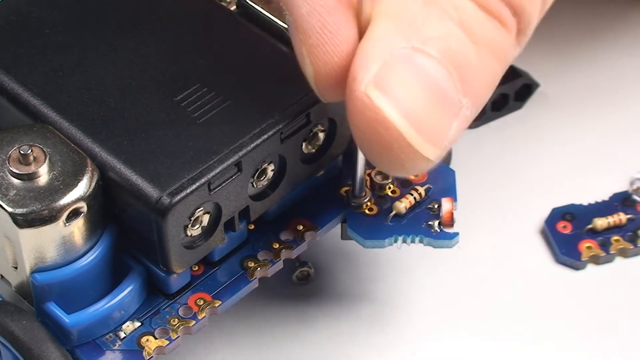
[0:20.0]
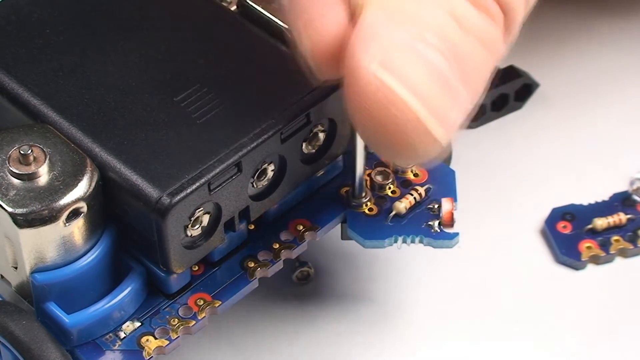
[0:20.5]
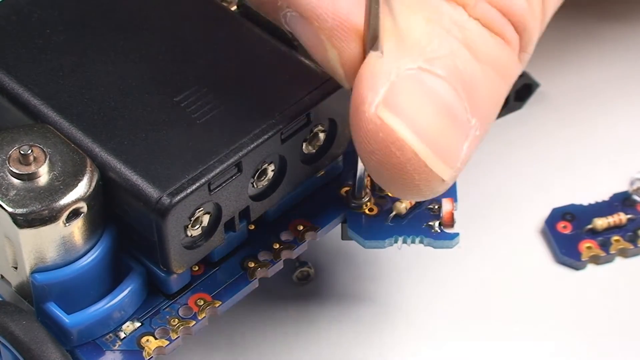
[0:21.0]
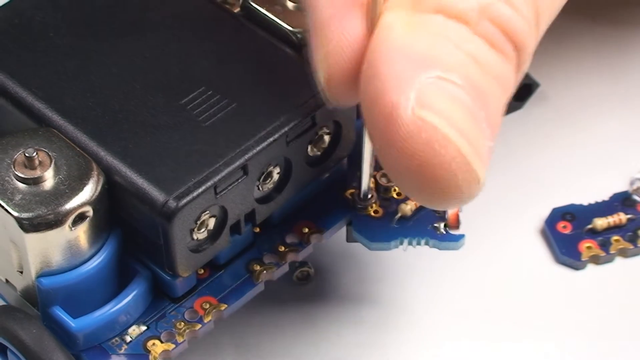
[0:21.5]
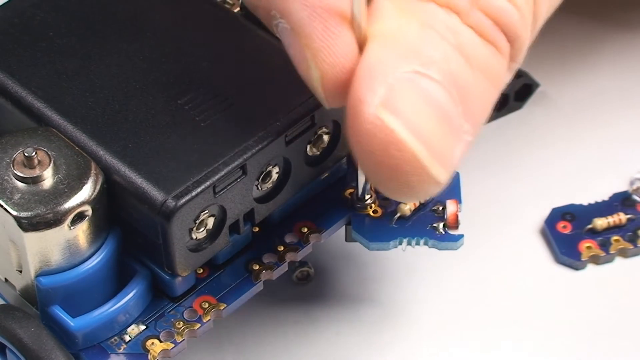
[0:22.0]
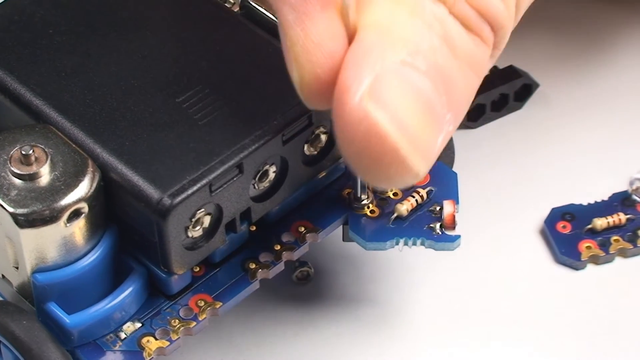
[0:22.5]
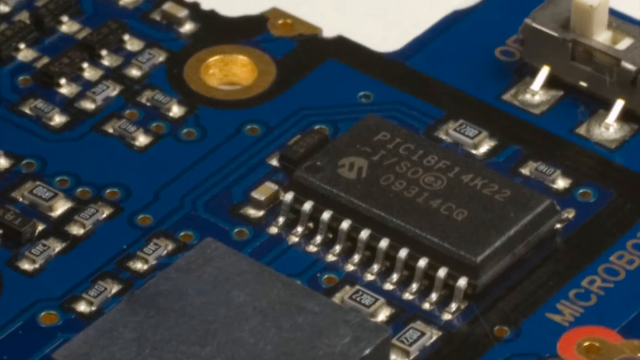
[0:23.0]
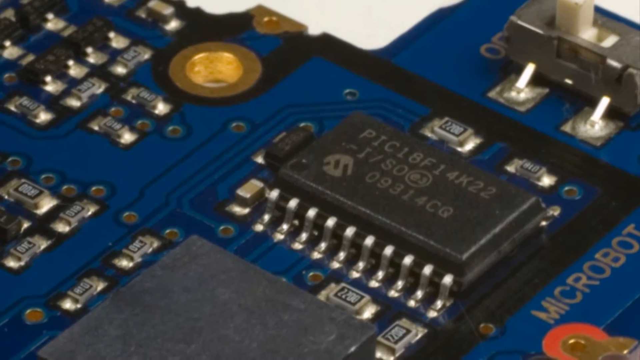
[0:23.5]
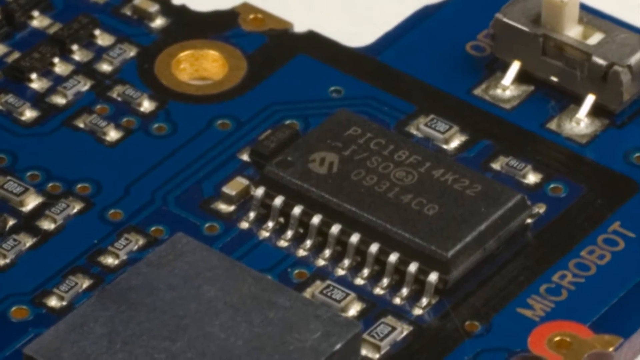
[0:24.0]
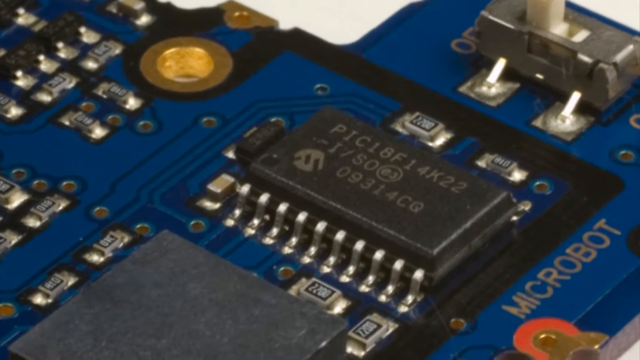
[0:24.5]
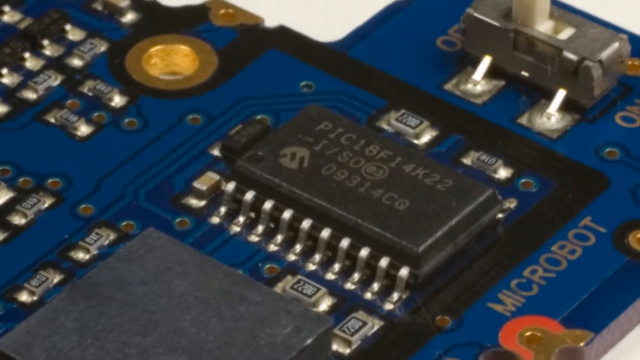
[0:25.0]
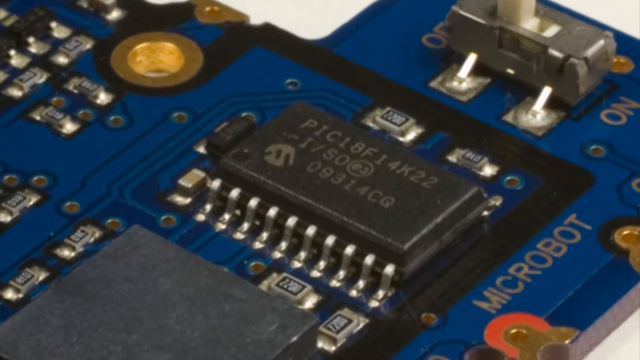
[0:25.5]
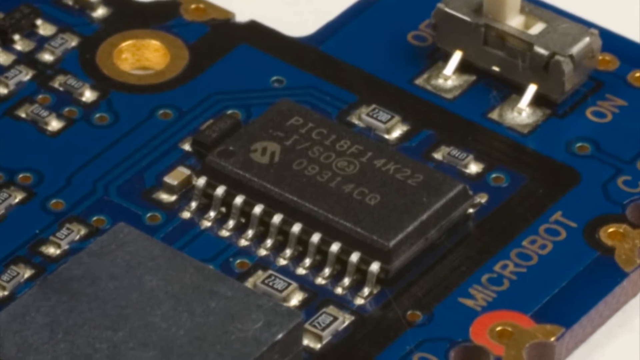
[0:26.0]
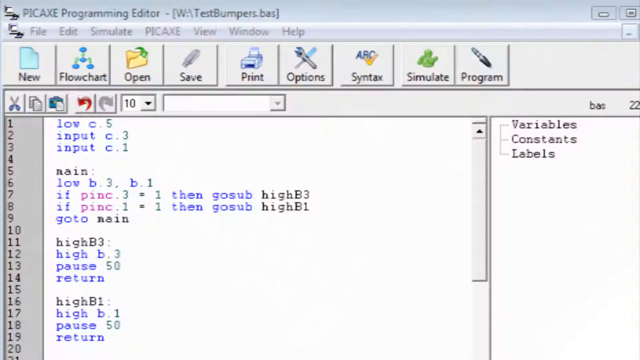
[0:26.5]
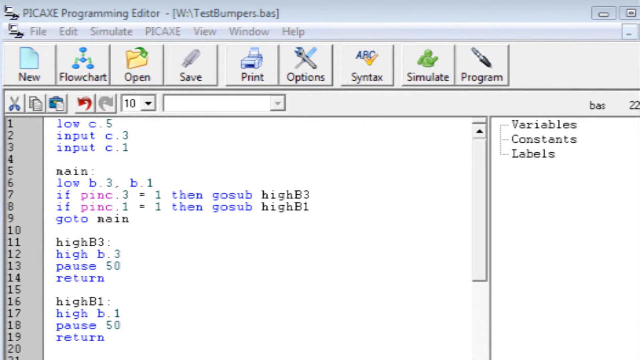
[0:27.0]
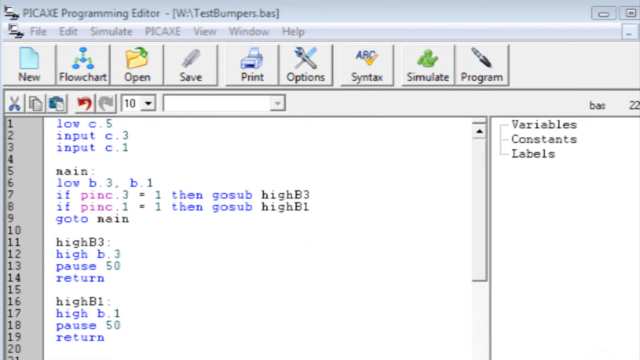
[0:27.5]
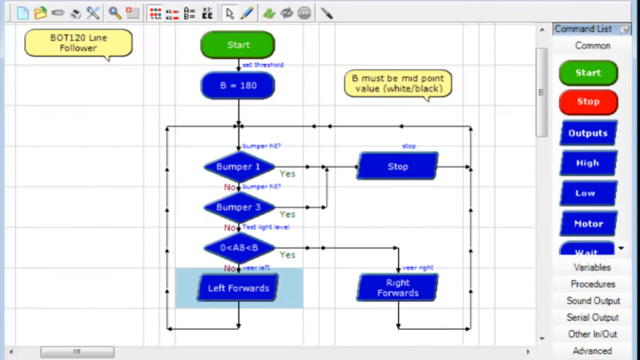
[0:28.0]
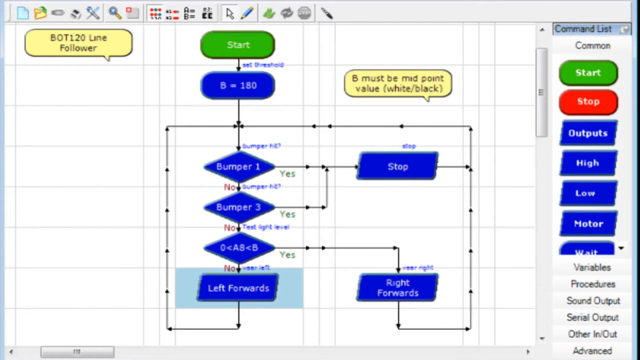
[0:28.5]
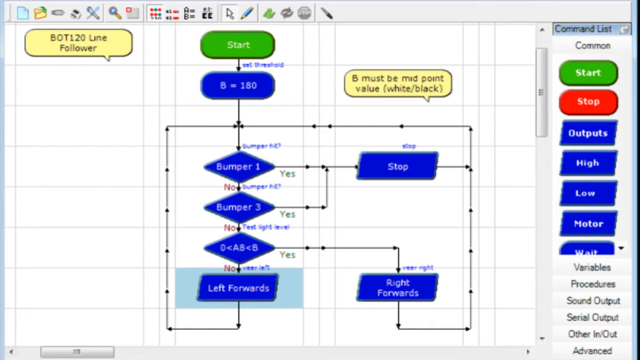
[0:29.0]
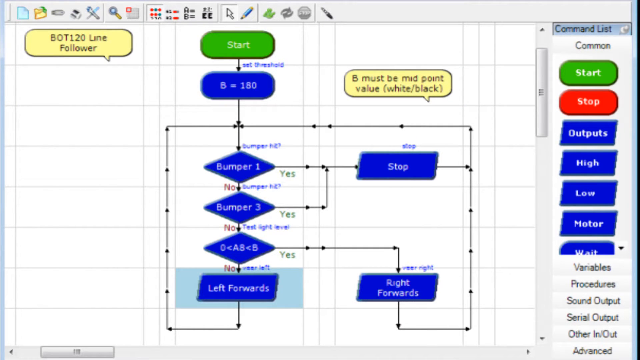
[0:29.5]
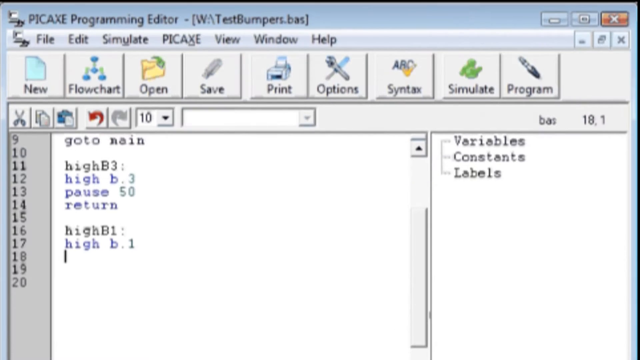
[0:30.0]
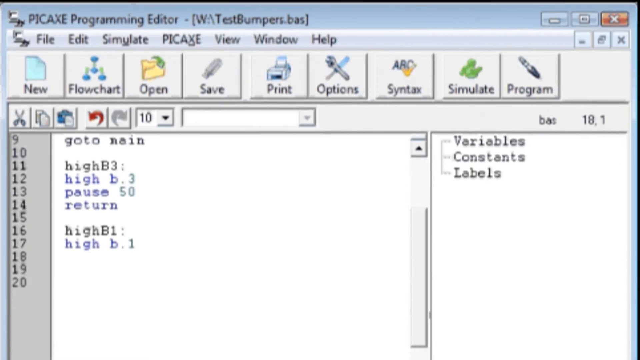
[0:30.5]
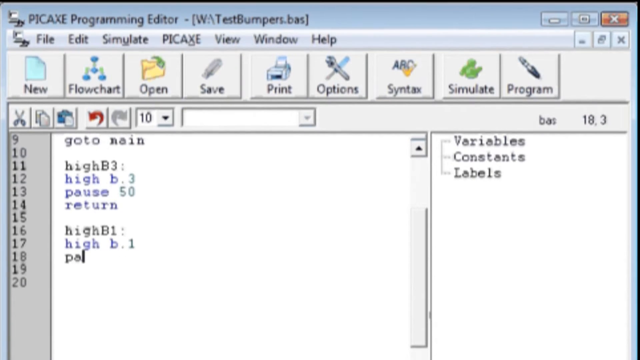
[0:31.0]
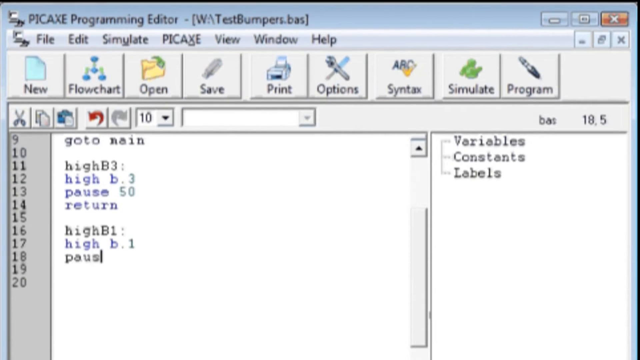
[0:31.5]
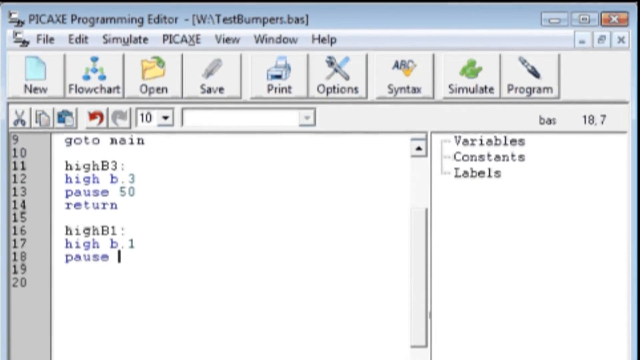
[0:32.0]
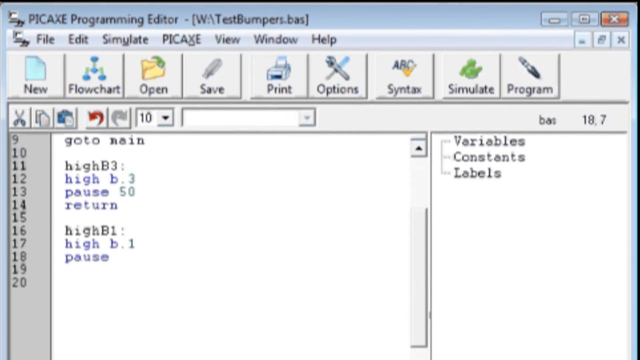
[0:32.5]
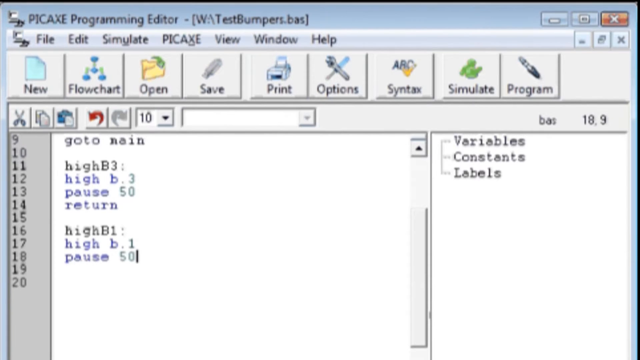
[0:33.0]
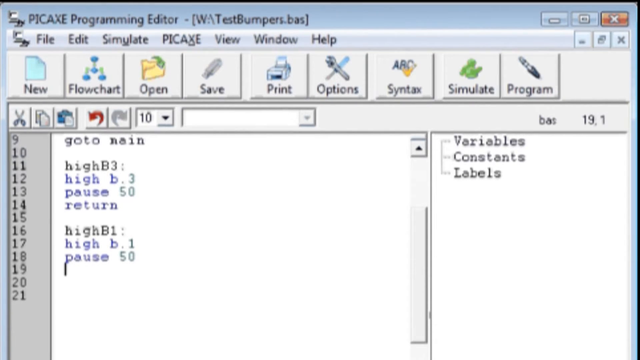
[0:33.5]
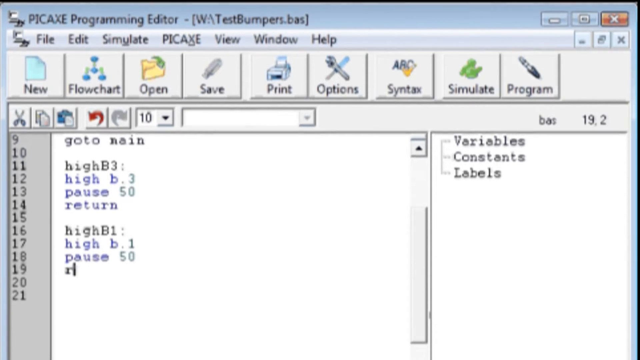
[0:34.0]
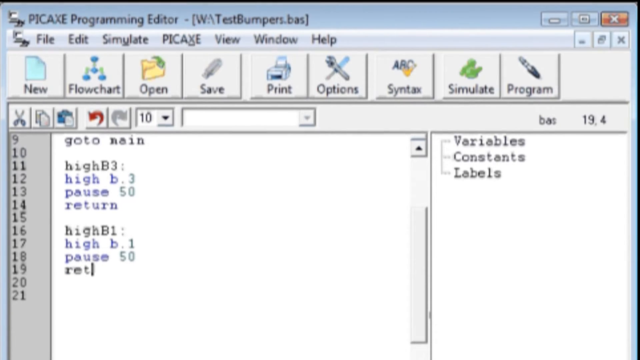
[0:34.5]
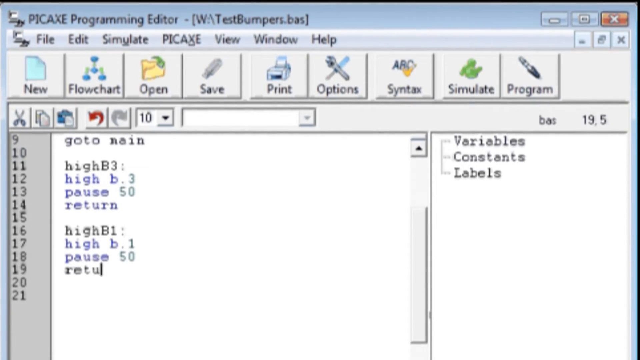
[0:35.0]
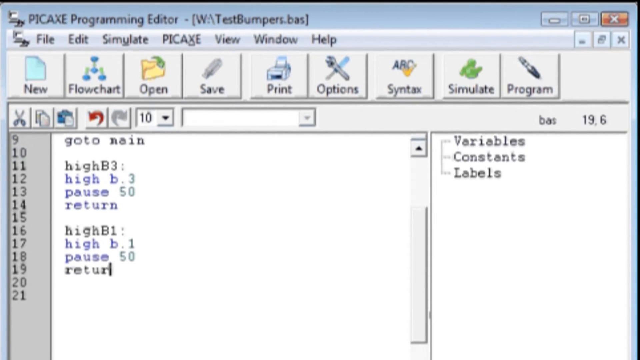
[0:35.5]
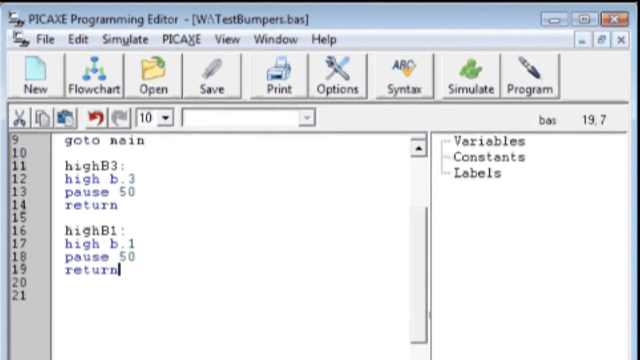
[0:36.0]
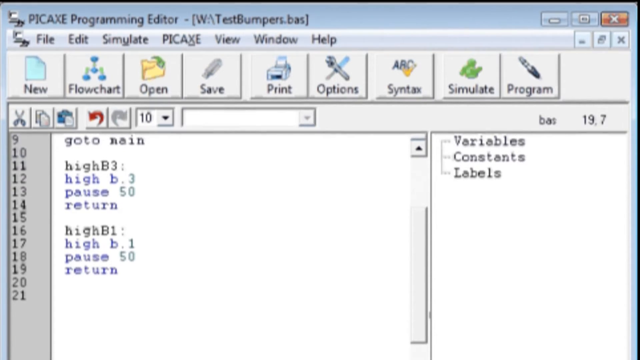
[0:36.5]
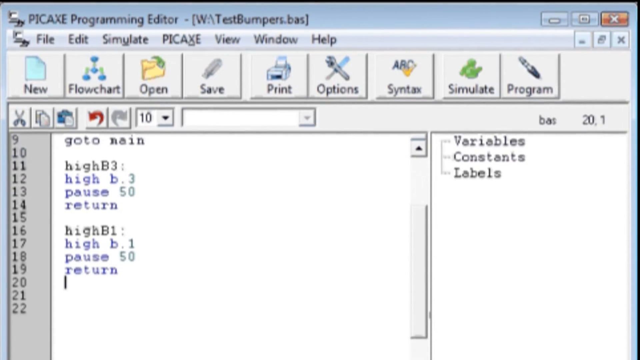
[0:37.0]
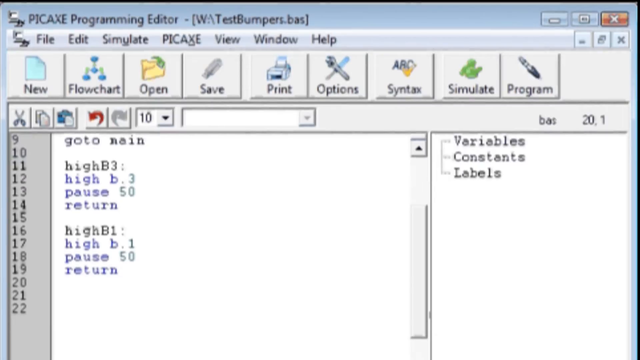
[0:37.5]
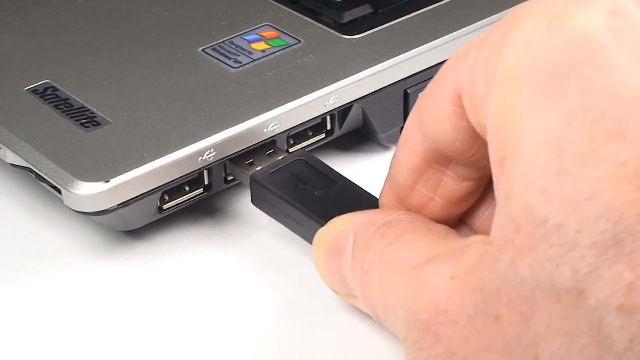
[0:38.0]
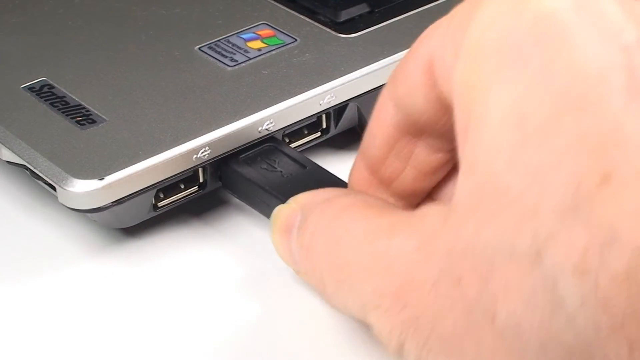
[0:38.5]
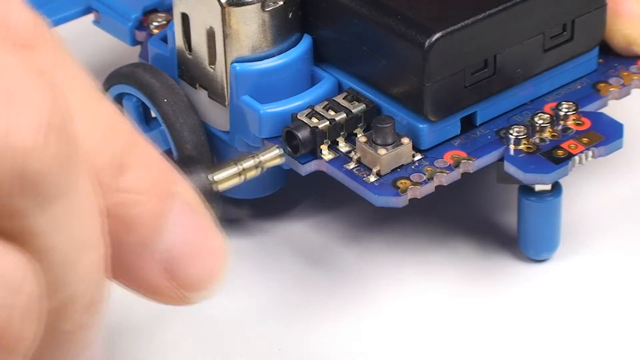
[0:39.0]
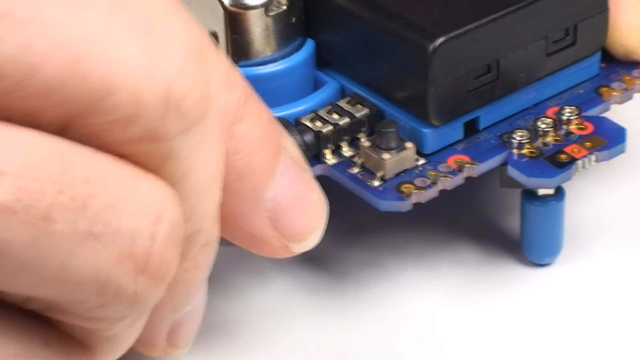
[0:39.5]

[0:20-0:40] The person continues connecting the parts that make up the robotic car. A close-up view shows the blue circuit board, with fine metallic traces branching in straight lines and sharp angles across its surface. In the center is a black rectangular IC with the text "PICI 8F14K22" printed in light gray, along with a microchip logo on the bottom left. The IC has a couple of silver pins, each soldered to matching metallic pads on the motherboard. Next, a program called picxprogrammingeditor appears with some code on it; it is apparently what is being used to automate the robot. Then a flowchart for the program being made is shown, containing four for loop statements.